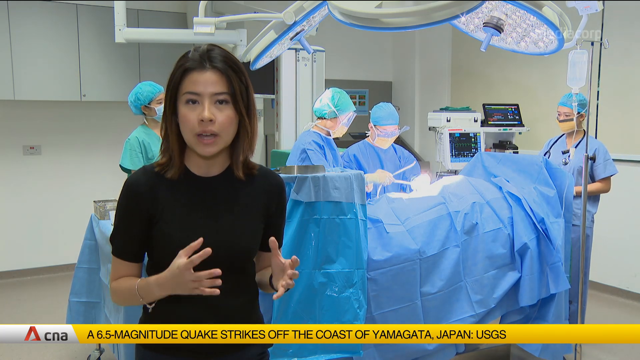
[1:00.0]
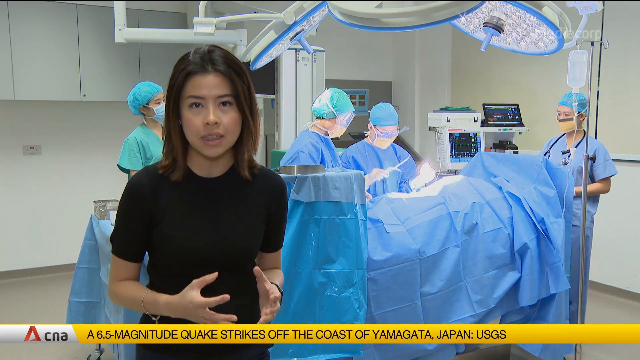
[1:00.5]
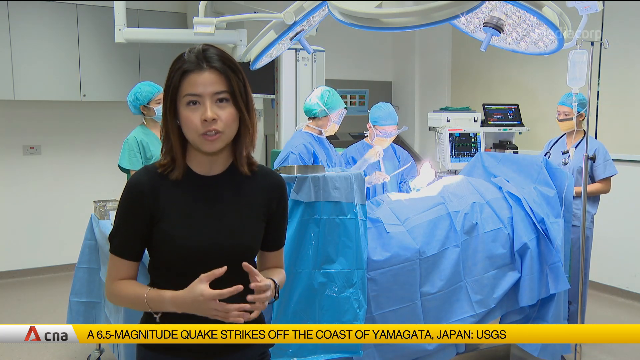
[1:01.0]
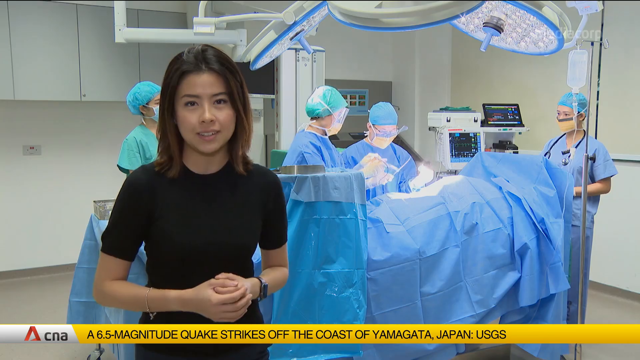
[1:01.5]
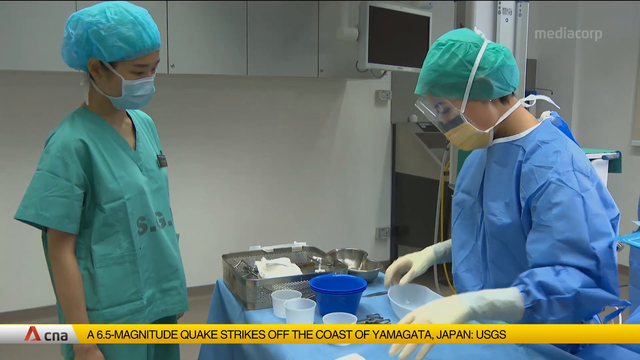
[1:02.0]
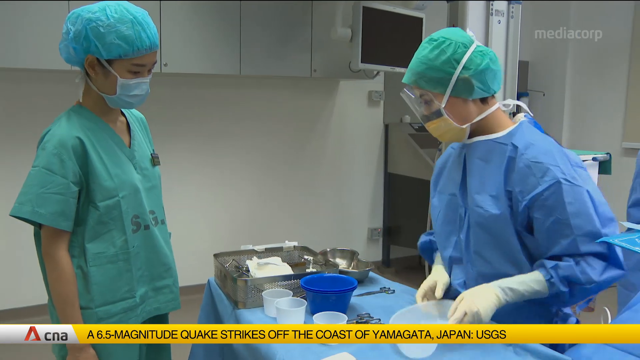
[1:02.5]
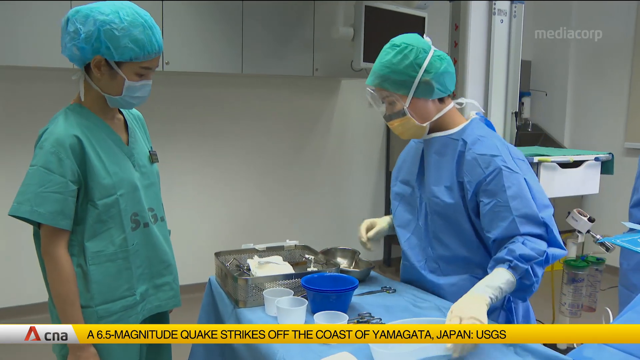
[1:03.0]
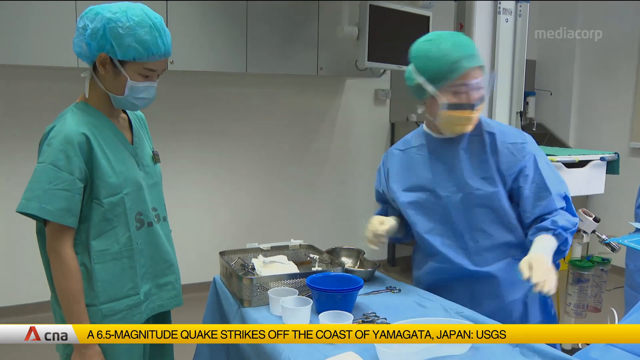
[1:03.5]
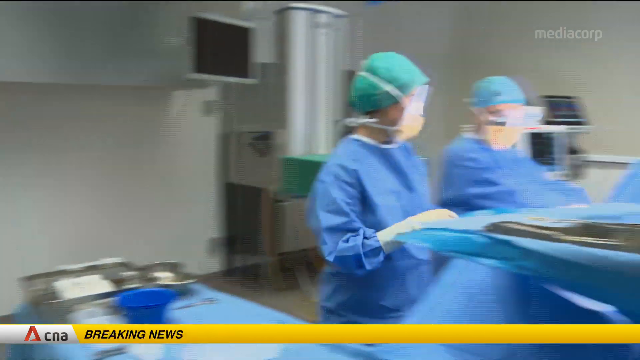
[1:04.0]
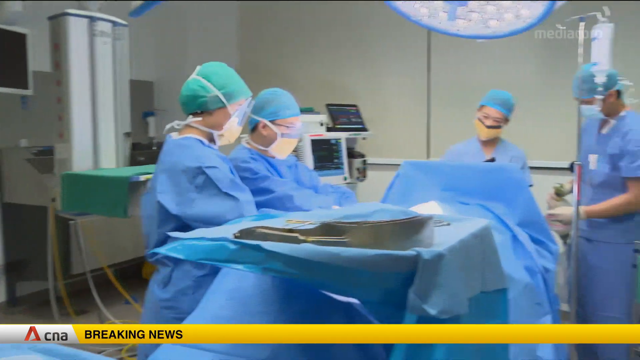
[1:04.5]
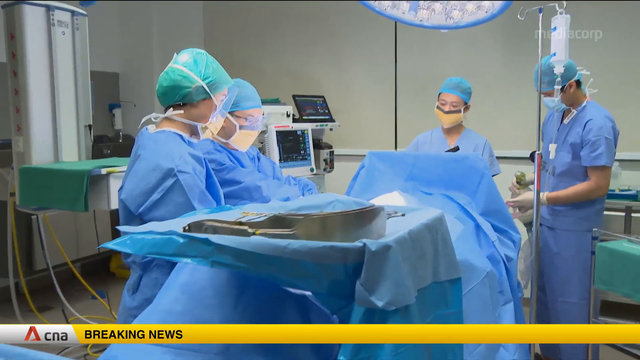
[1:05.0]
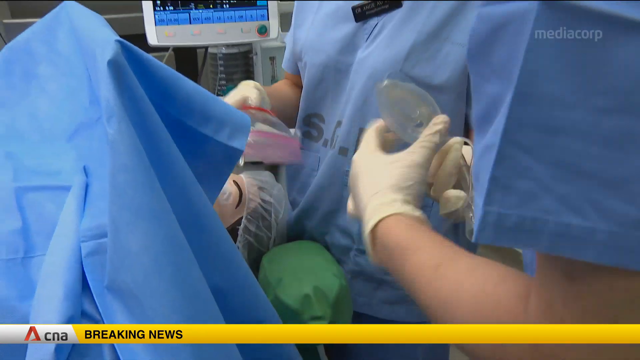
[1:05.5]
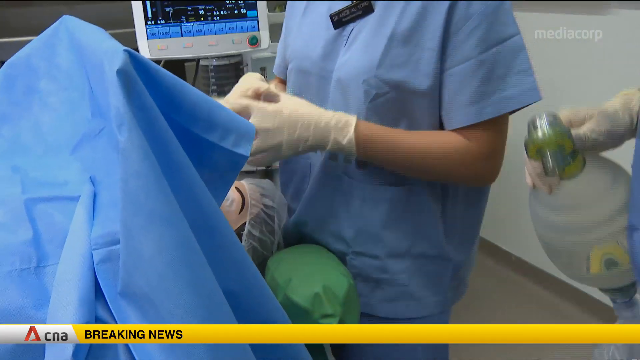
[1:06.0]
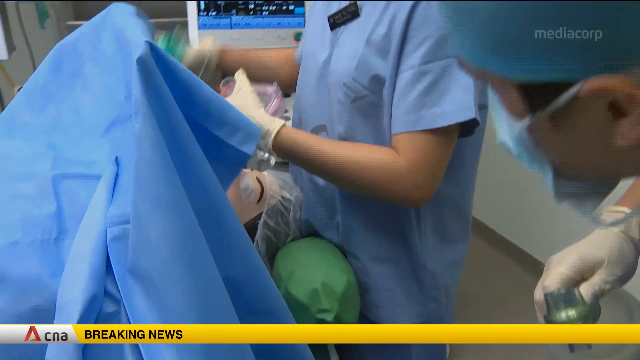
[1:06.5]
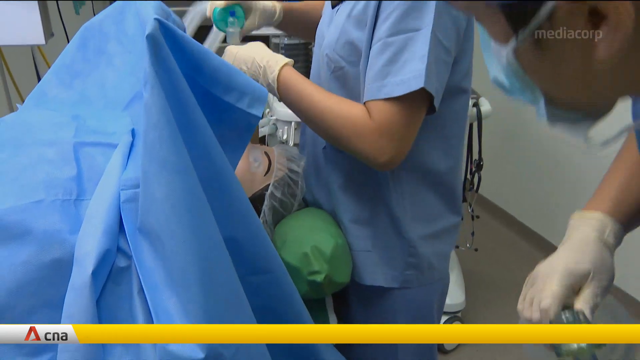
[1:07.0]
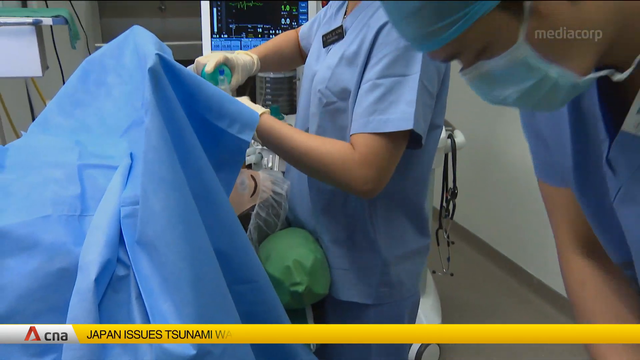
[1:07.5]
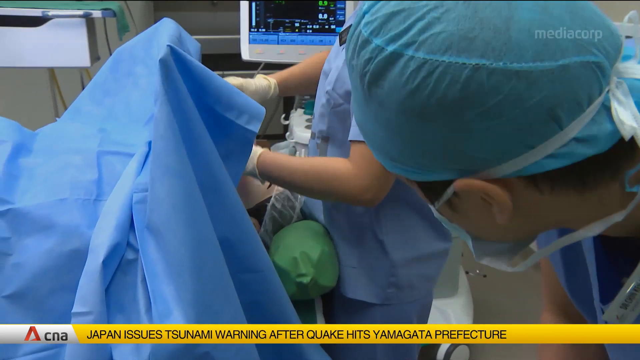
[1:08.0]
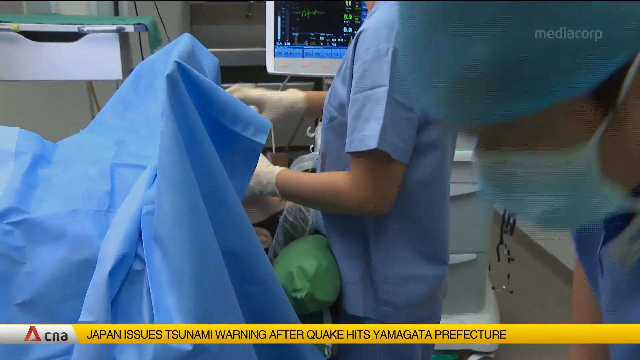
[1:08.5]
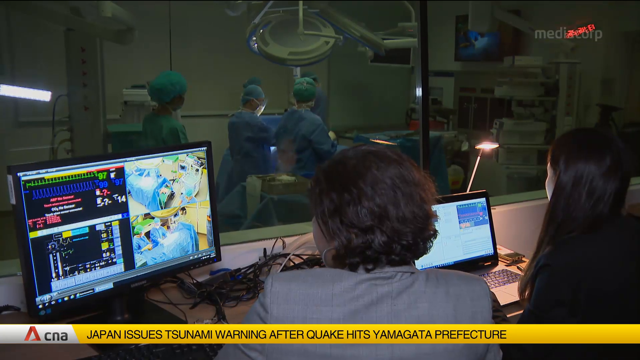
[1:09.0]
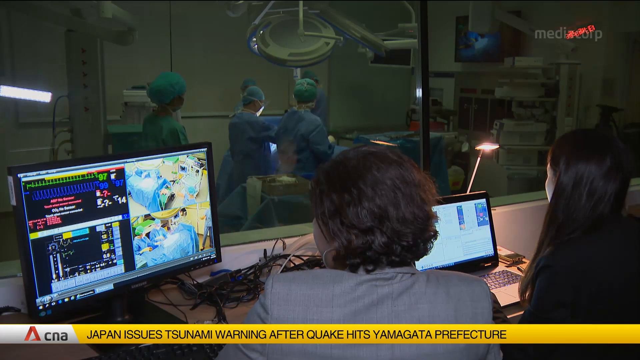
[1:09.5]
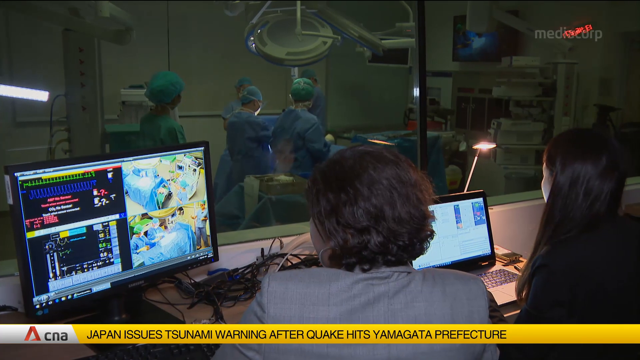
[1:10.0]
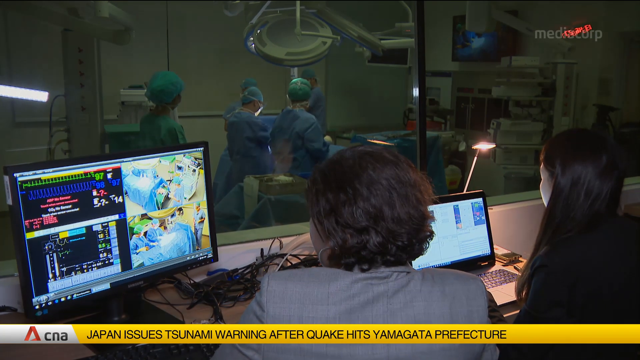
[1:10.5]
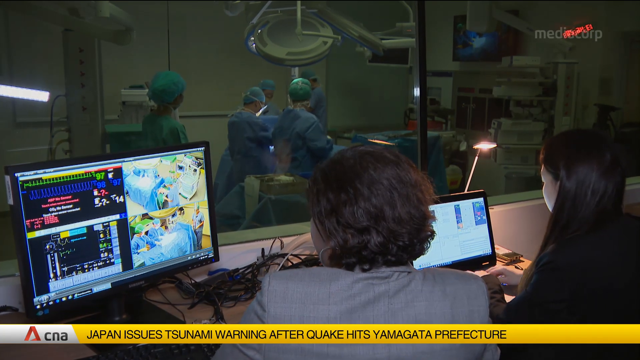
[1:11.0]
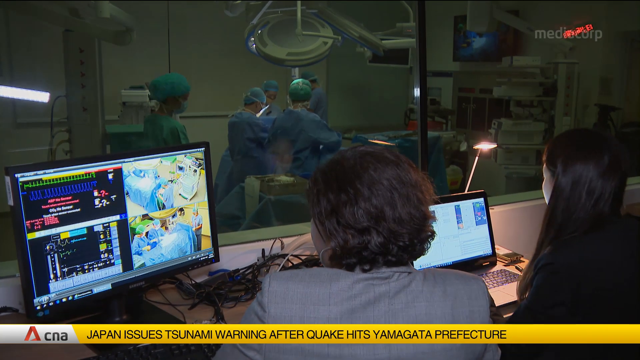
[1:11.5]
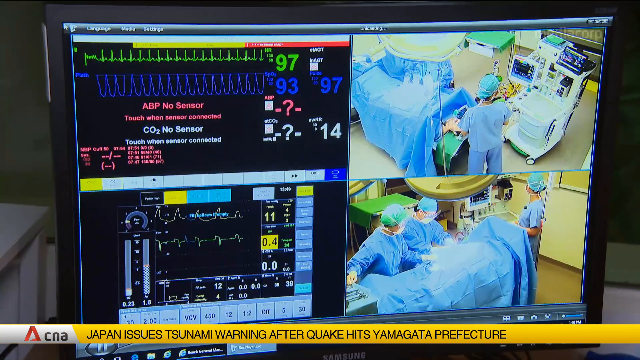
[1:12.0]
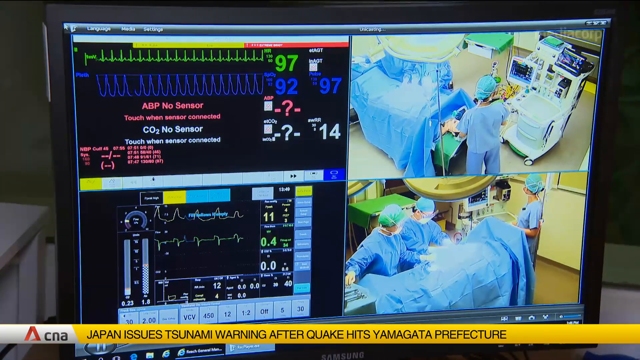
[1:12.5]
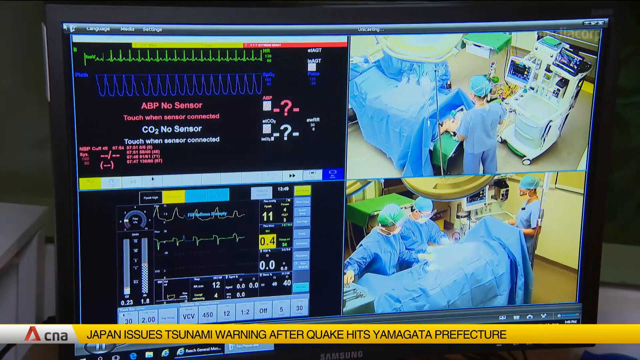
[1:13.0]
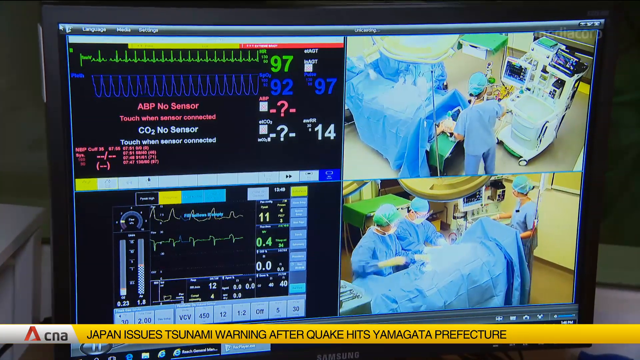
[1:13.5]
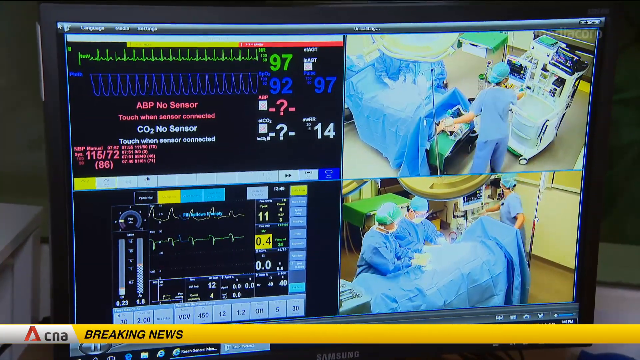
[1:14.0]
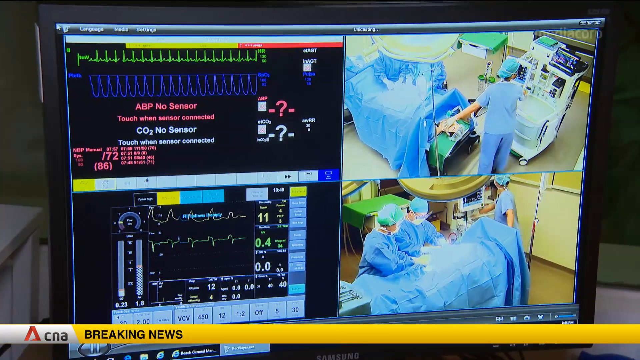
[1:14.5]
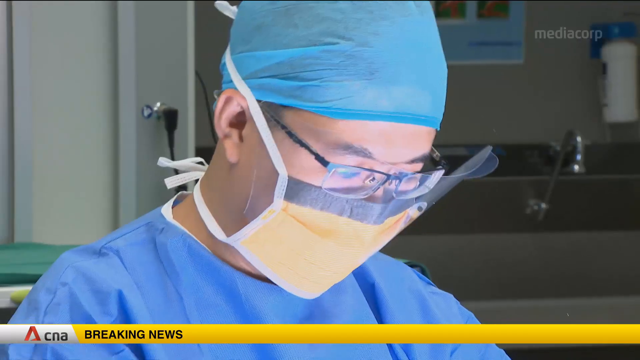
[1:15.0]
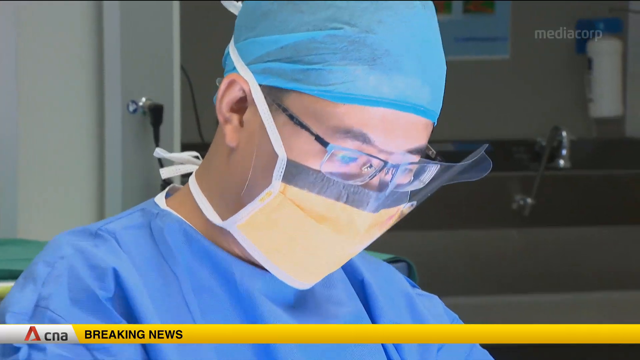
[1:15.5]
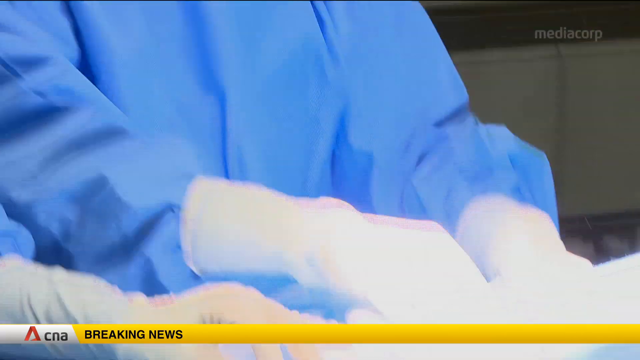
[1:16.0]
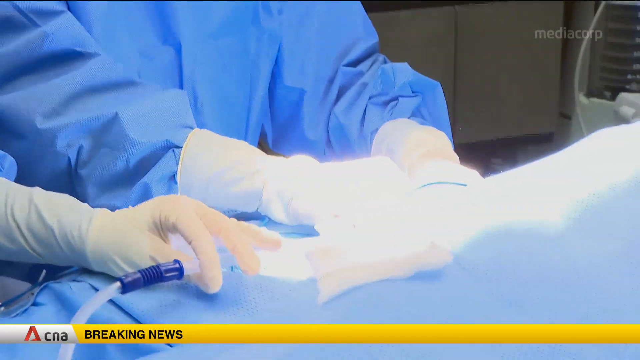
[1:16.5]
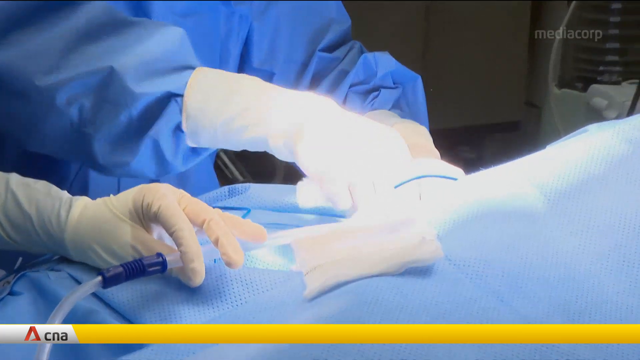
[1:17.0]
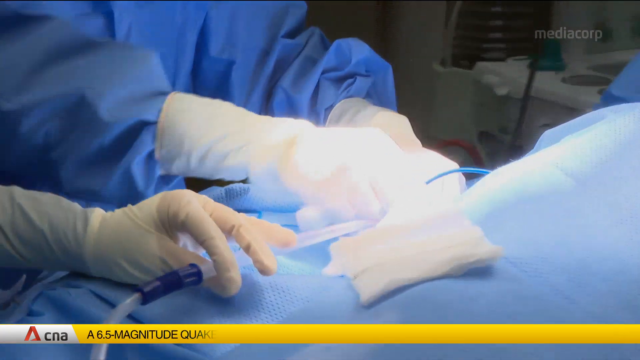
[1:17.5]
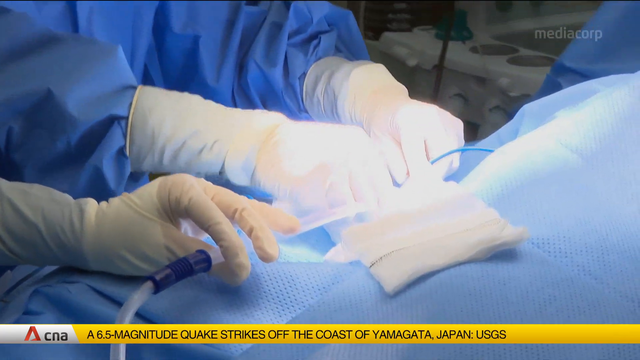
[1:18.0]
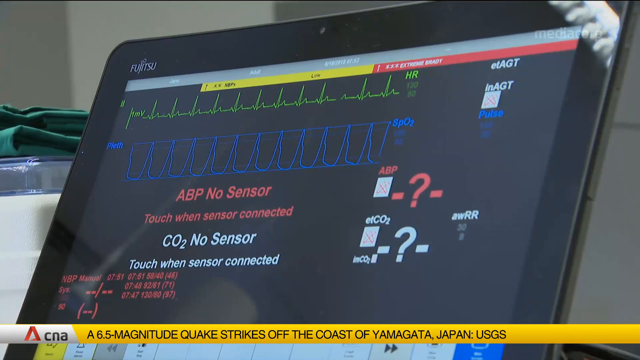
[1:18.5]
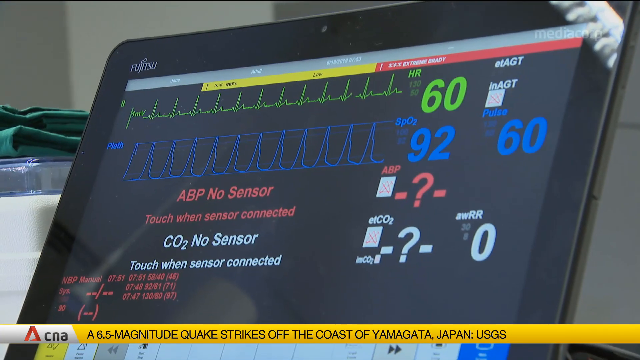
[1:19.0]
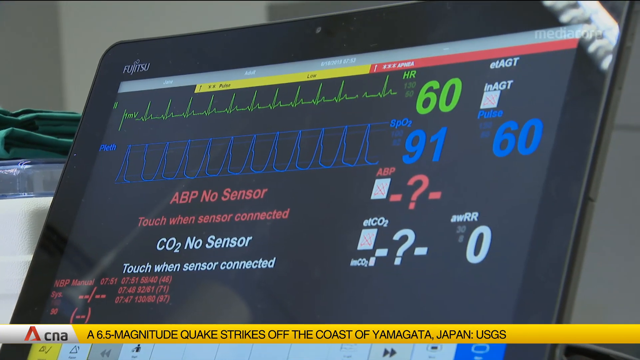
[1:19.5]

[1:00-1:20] In a news broadcast, an Asian woman with shoulder-length brown hair and a plain black t-shirt is on the left, seen from the waist up, actively talking to the camera. Her hands are in front of her torso, bent at the elbows, fingers splayed and angled as if holding an invisible ball. Behind her are four medical personnel, presumably doctors or nurses, all in blue or green gowns, caps and medical masks, angled toward a hospital bed that looks like it might have a patient in it, covered in a blue sheet. Other pieces of medical equipment are behind them. The camera then zooms in on what the doctors are doing; they look like they are working under the sheet, putting a mask on a patient there.